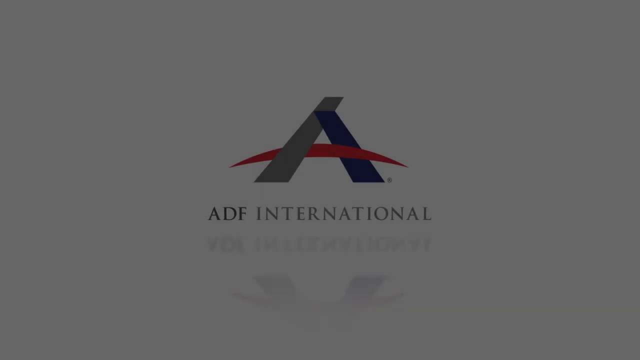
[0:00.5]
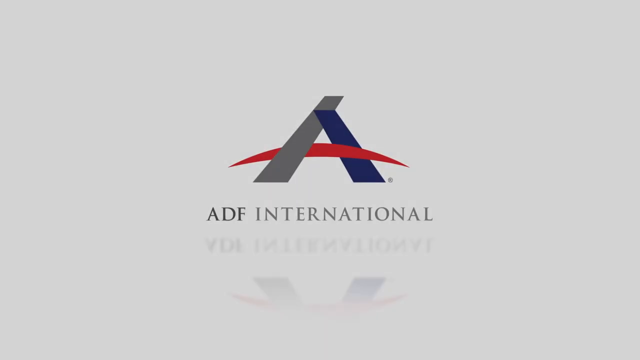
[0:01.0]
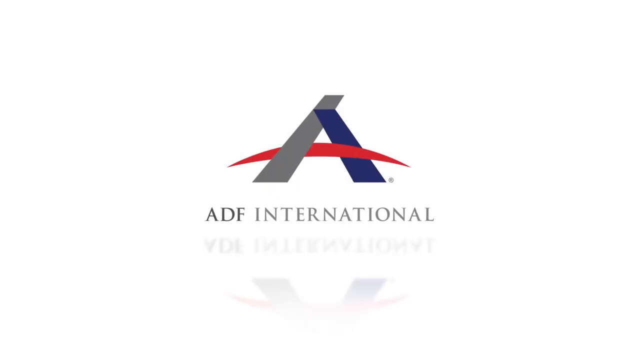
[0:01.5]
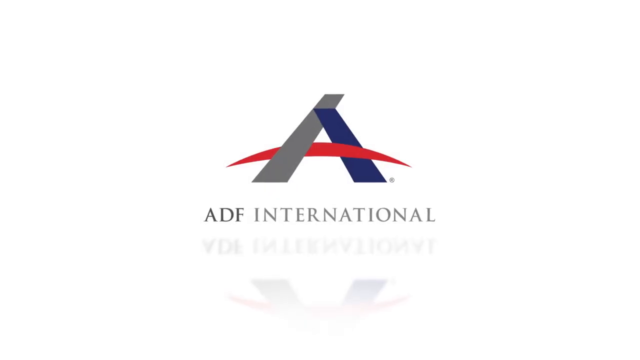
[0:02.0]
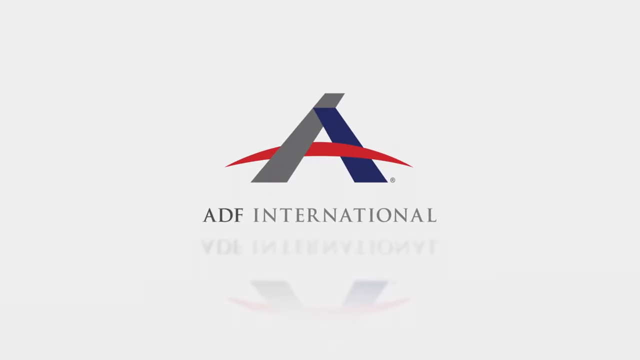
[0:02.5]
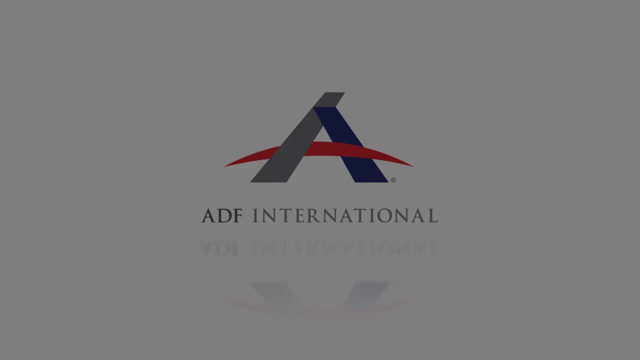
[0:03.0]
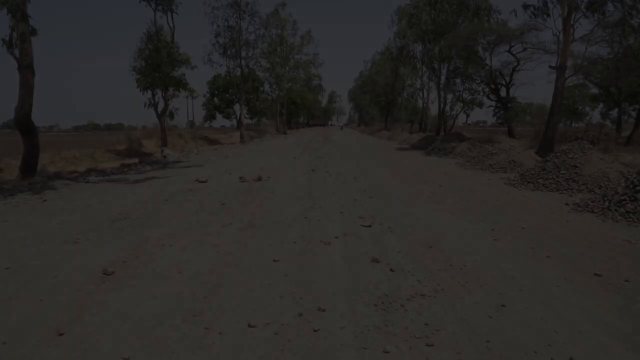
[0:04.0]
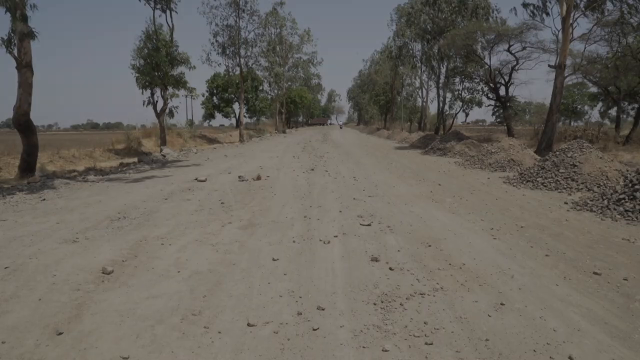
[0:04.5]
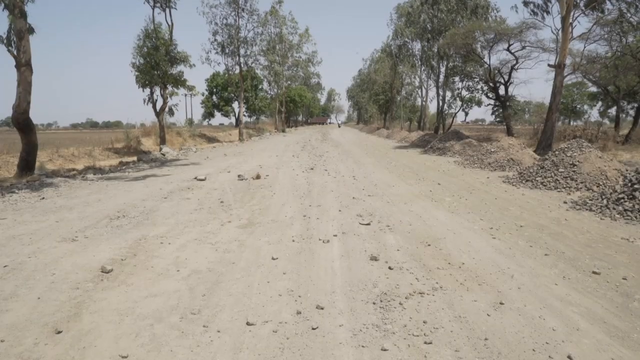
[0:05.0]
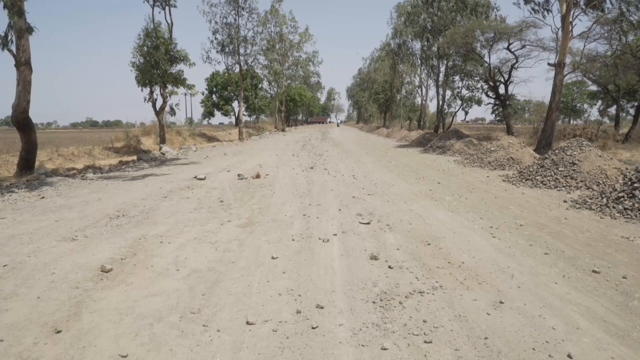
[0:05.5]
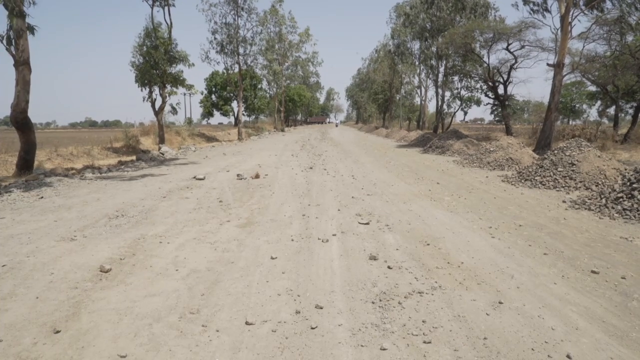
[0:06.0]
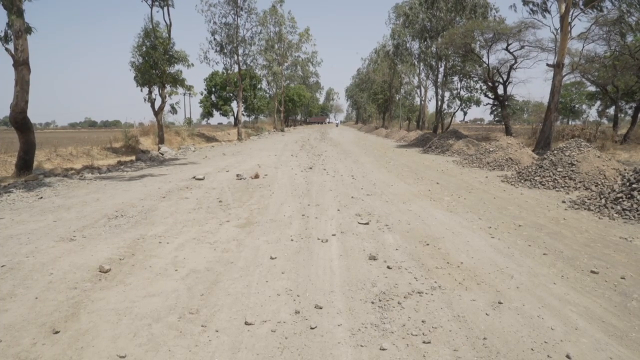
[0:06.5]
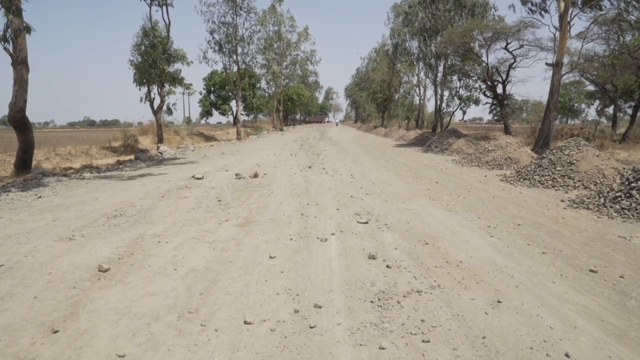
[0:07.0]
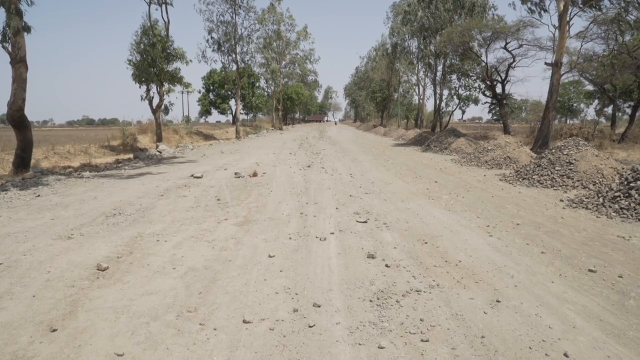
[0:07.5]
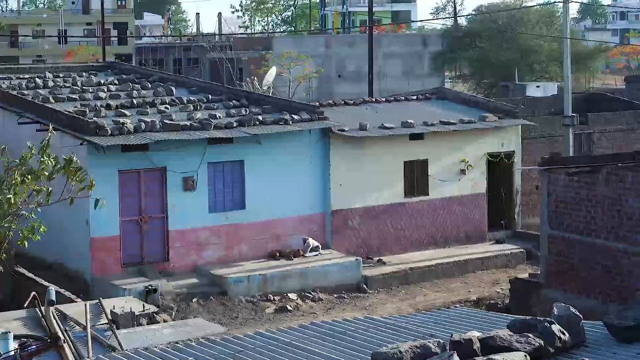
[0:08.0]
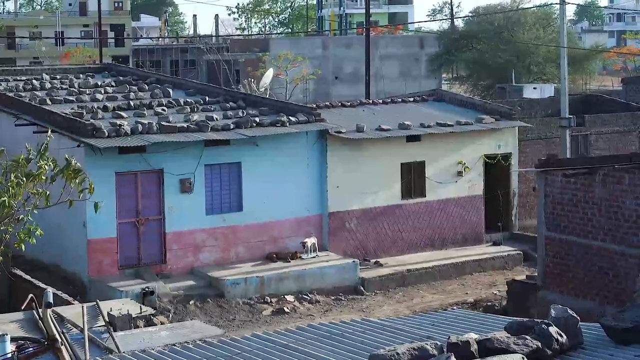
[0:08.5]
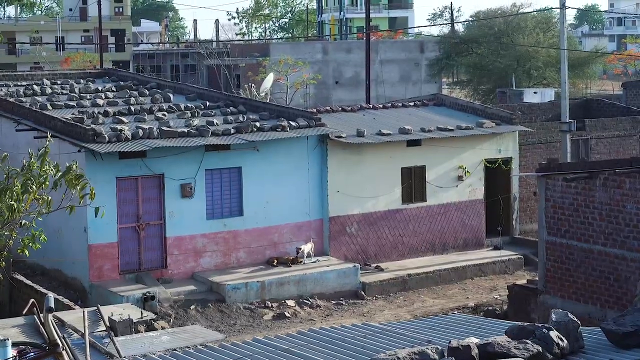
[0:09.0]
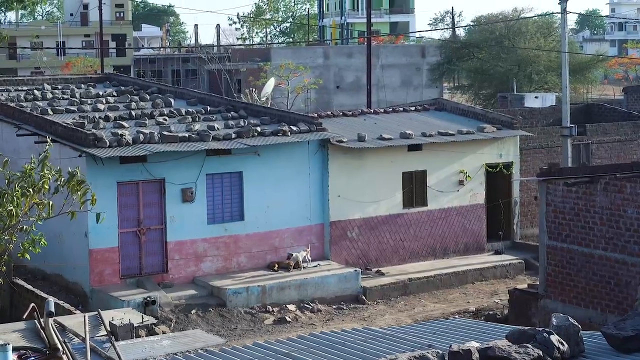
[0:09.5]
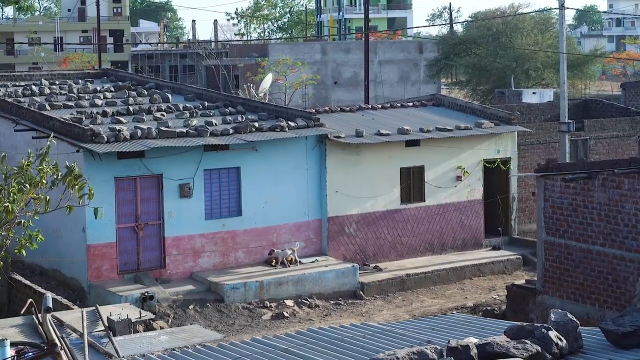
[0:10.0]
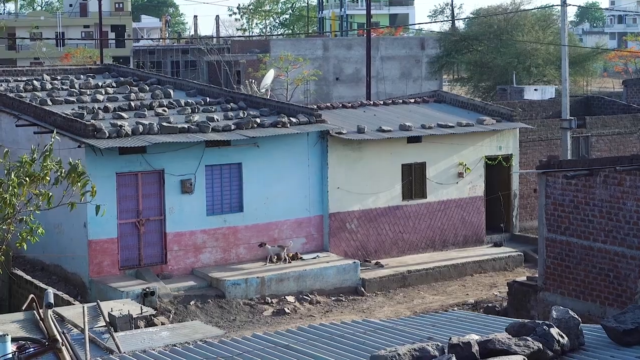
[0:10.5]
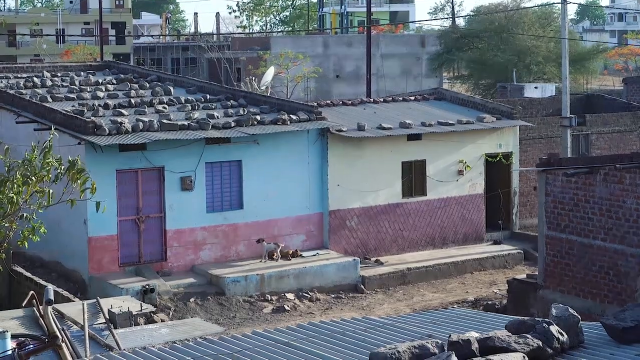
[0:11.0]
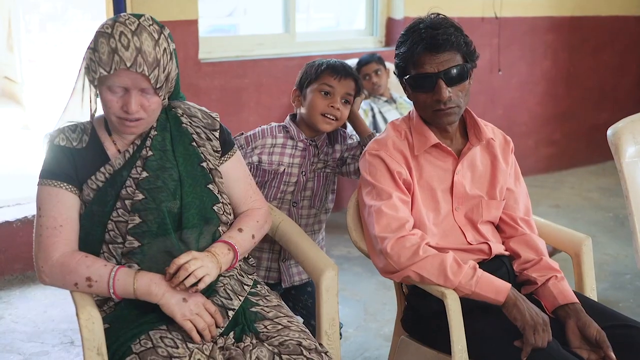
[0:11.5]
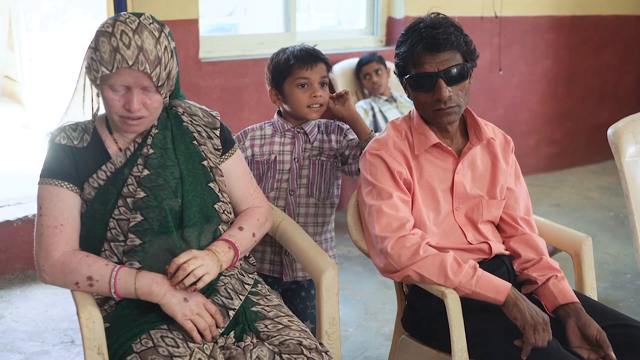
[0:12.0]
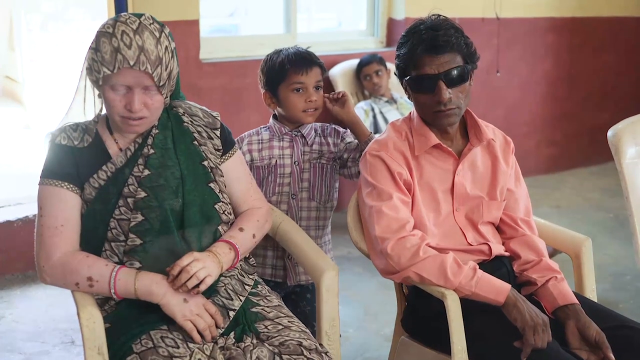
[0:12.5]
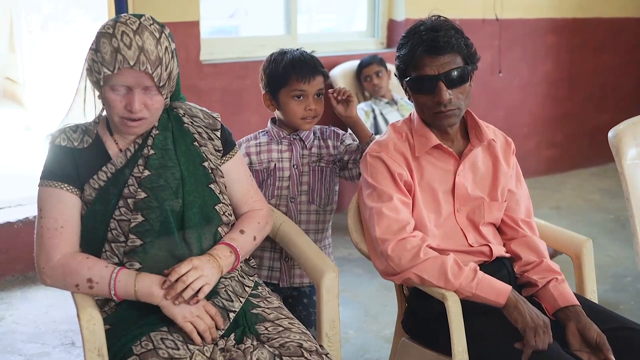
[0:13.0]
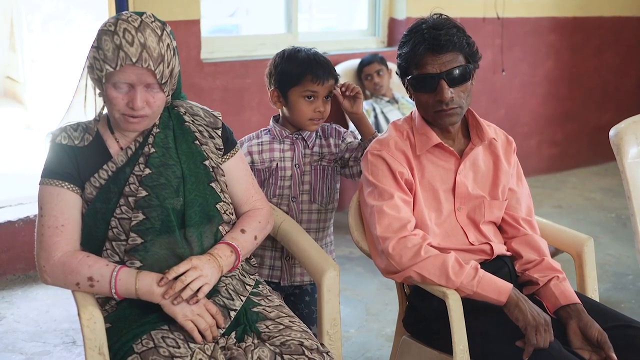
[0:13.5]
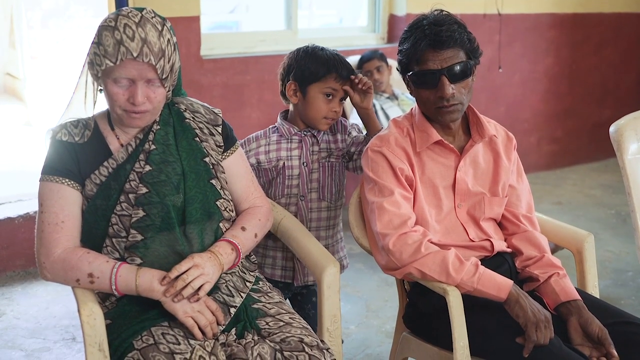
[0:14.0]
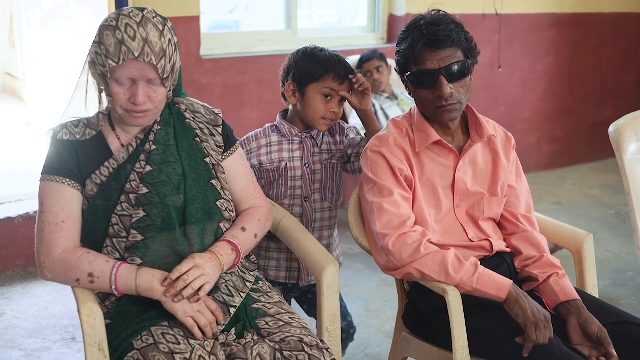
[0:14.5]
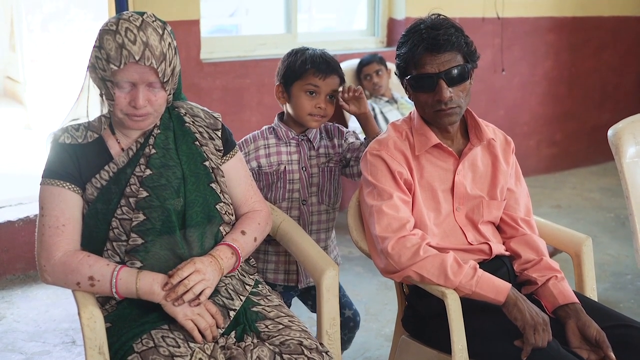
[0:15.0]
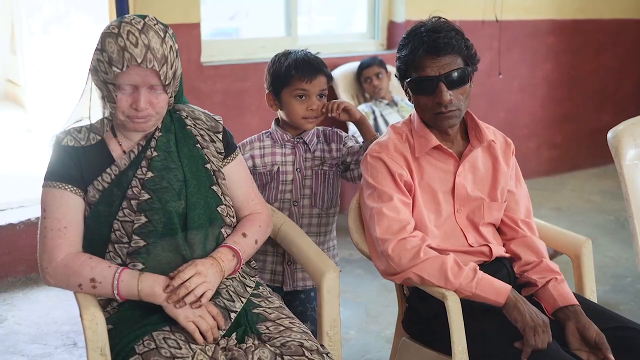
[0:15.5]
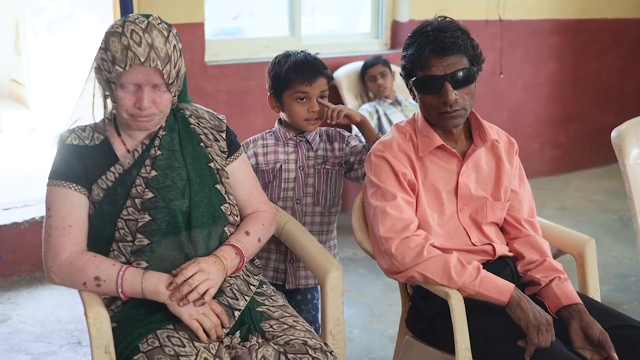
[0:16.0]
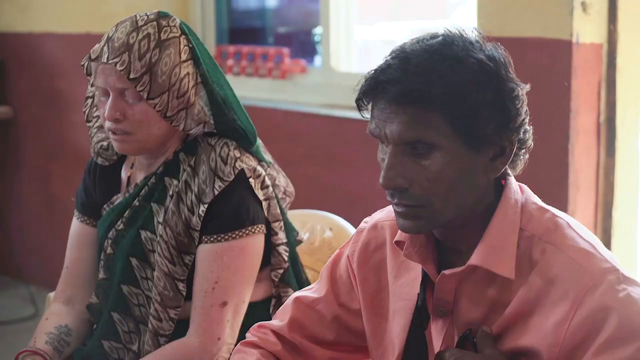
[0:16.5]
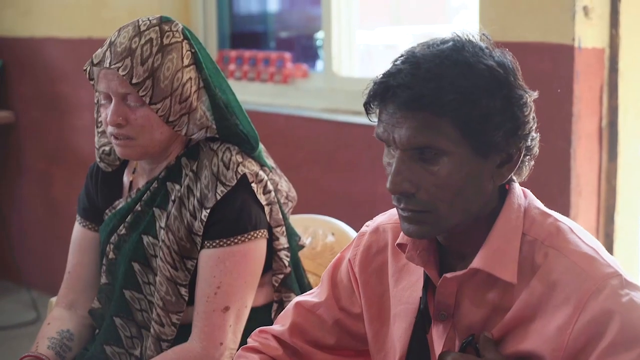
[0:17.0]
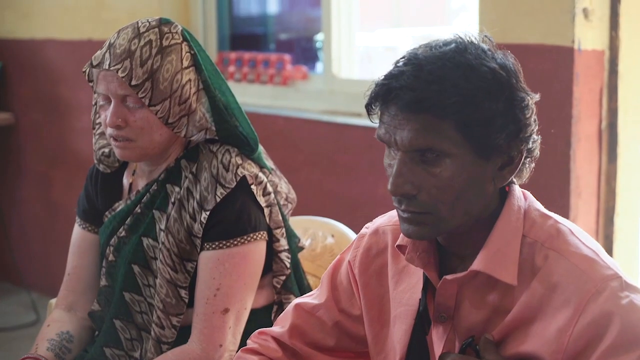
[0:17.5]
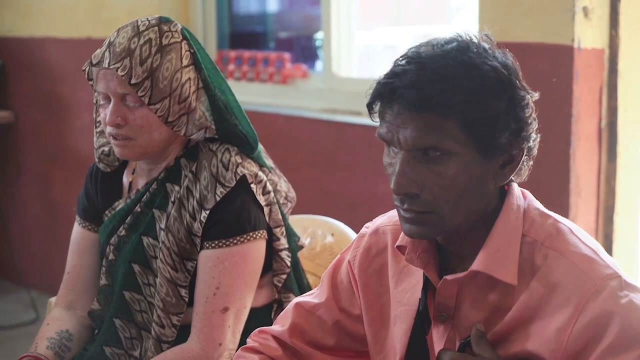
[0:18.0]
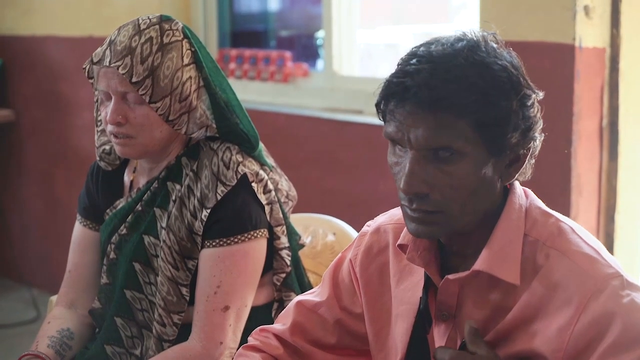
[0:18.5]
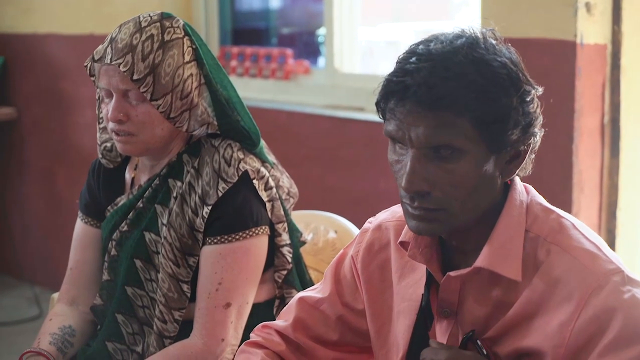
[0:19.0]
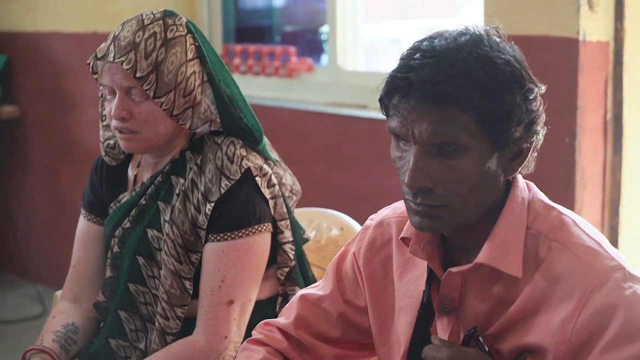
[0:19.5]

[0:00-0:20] A black screen fades into a white screen that reads "ADF International" with a logo that looks like two pillars leaning on each other, with a red, kind of upside-down parenthesis in the middle. The left pillar is gray and the right pillar is blue, and there is kind of an implied reflection at the bottom. The screen fades to black and opens on what looks like a two-, maybe three-lane dirt road. The road is lined with scraggly trees, with maybe some piled-up dirt on the side; there appear to be open fields on either side, additional tree lines in the distance, and some rocks here and there. Next come views of what appear to be dwellings, brightly colored on the outside. The first building is kind of a bluish red, a separated color, with a purple door and maybe blue windows. Its roof does not appear to be a typical American roof: lots of rocks are laid across the top, holding down whatever the roof is made of. The building next to it has a yellow top and a reddish-pink bottom, and the rocks on this one are more around the edge than across the entire top. There are other buildings as well: a brick building at the bottom, one to the right that is maybe cinder block, plus power lines and communication lines. There even appears to be a dog on the porch of the blue and pinkish building. The camera moves around. Next, four people appear in a shot. One appears to be a very pale woman in what seems to be indigenous dress, a green kind of garment with a covering; she has spots on her arms like liver spots and wears some bracelets. An older man wears a salmon-colored shirt, black pants and black glasses; he is very tan with black hair. A child behind him wears a patterned, button-up kind of shirt and has black hair and very tan skin. Another child in the back wears a lighter shirt and also has black hair and very tan skin. They are all sitting in tan, cream-colored chairs. The man removes his glasses, revealing very sunken eyes.